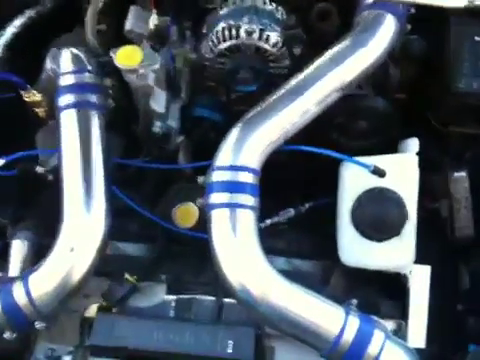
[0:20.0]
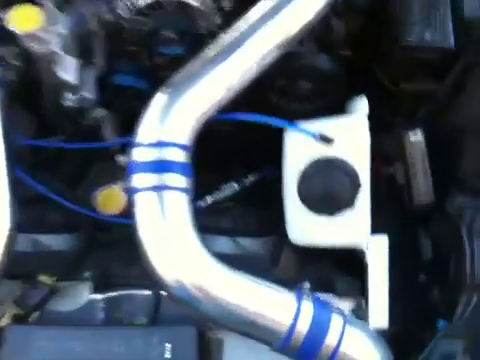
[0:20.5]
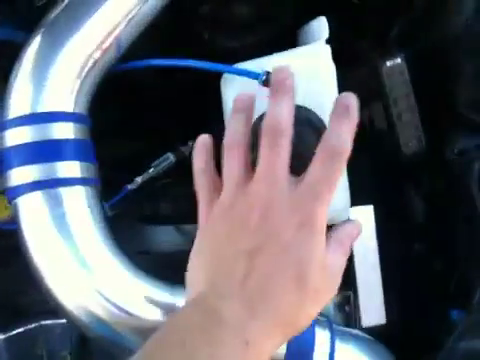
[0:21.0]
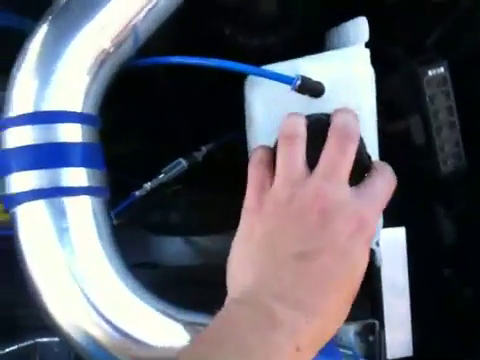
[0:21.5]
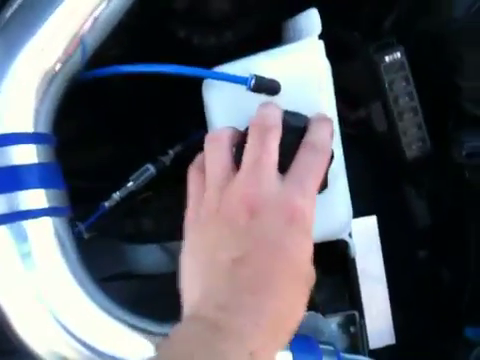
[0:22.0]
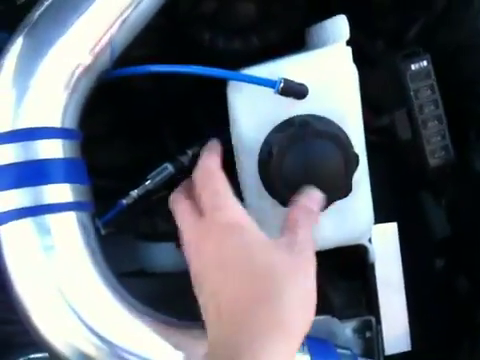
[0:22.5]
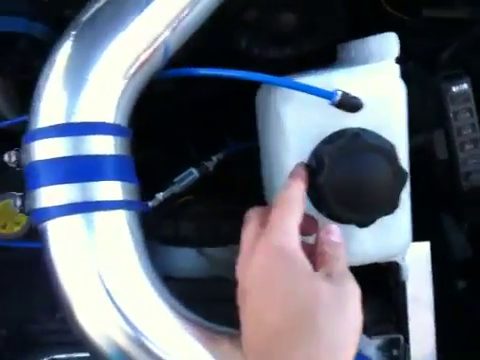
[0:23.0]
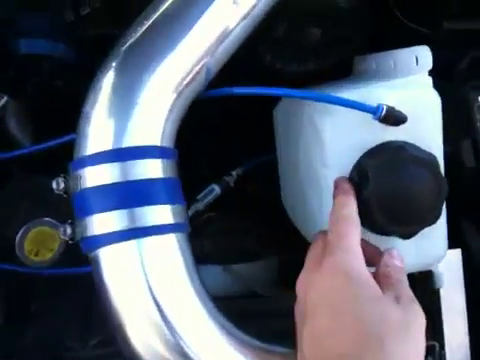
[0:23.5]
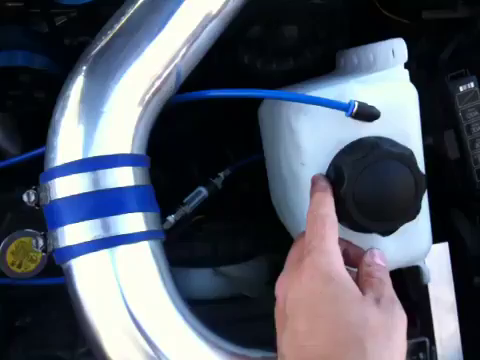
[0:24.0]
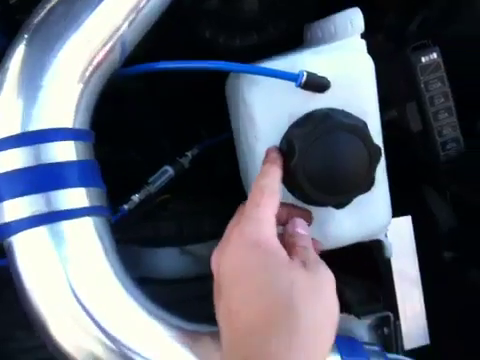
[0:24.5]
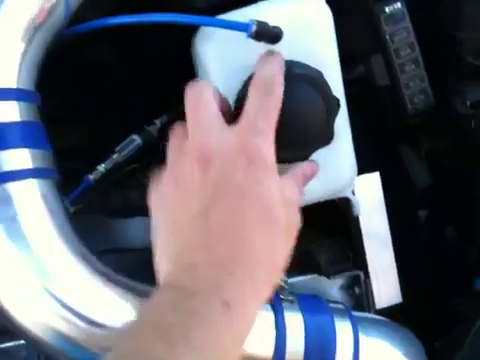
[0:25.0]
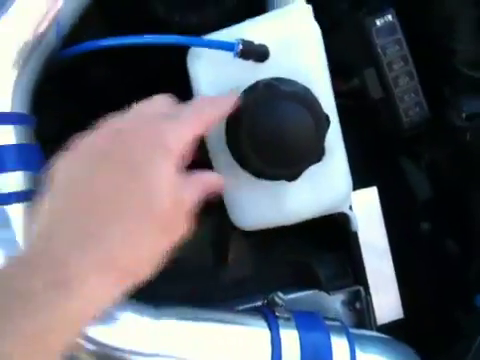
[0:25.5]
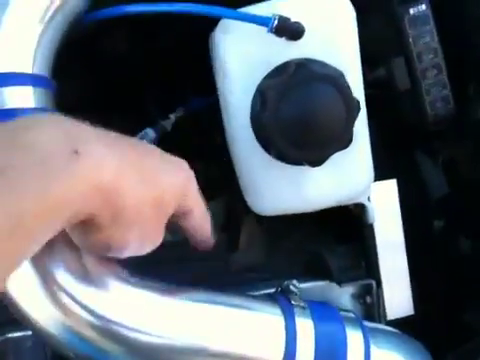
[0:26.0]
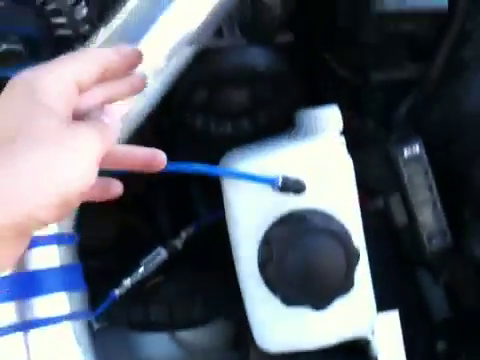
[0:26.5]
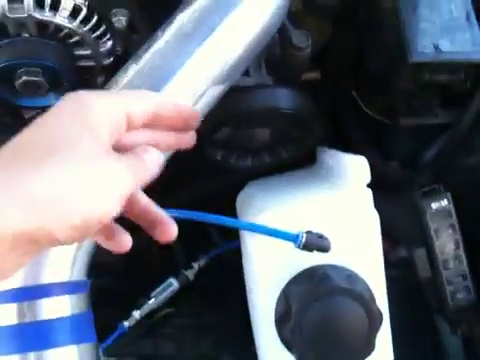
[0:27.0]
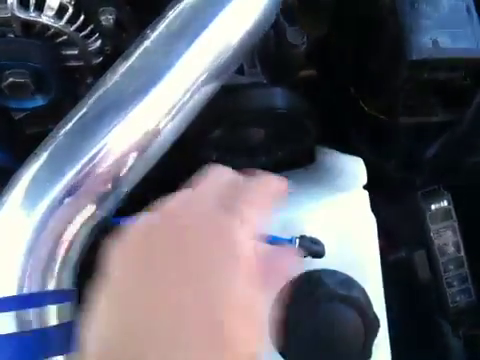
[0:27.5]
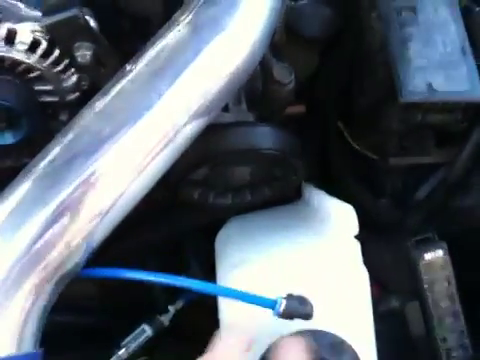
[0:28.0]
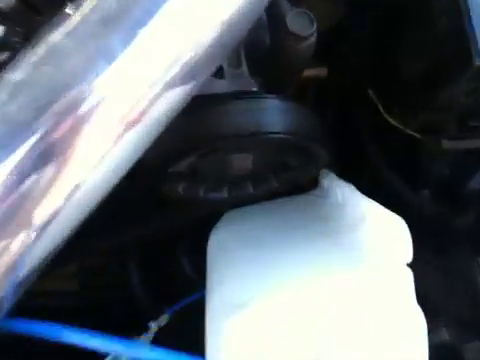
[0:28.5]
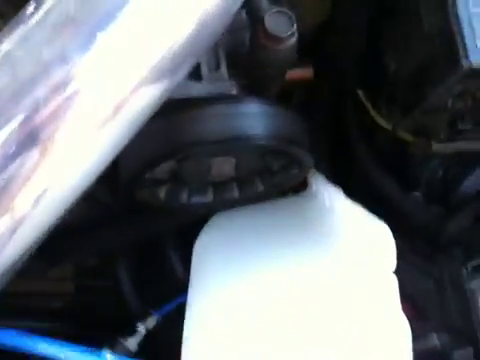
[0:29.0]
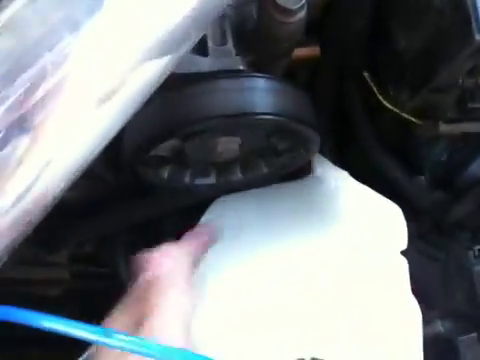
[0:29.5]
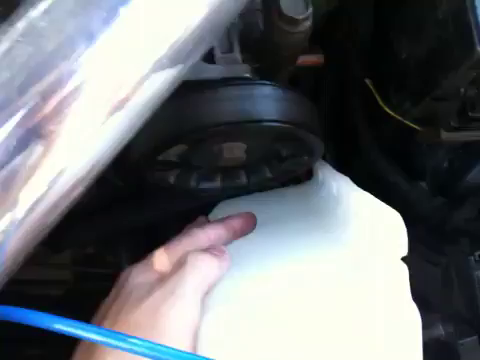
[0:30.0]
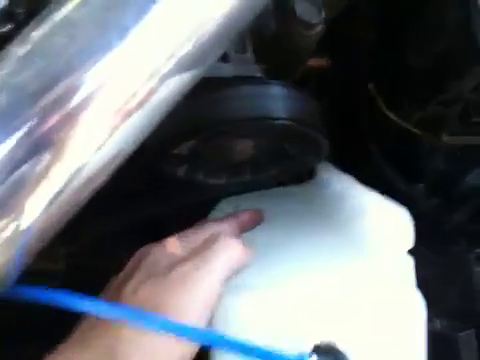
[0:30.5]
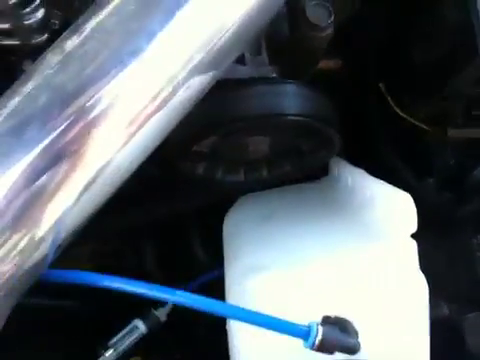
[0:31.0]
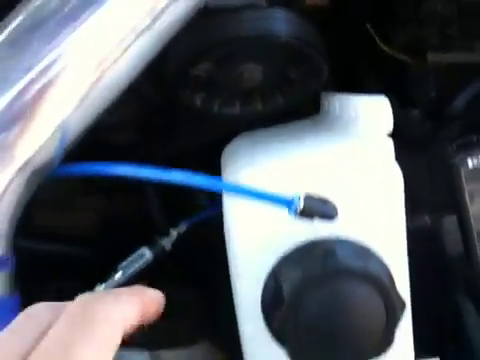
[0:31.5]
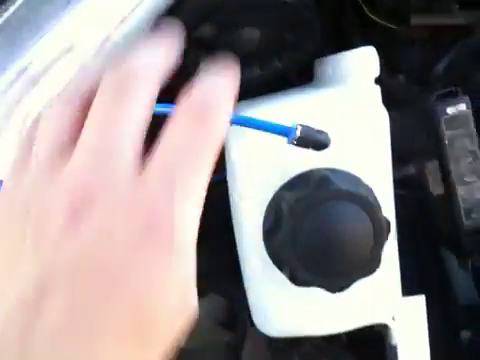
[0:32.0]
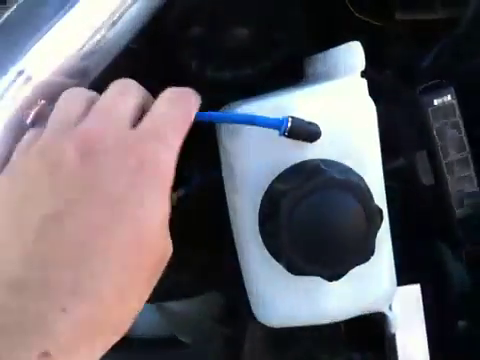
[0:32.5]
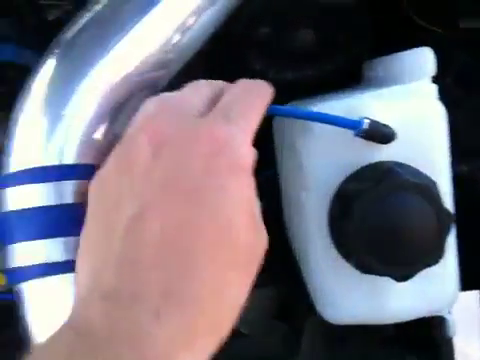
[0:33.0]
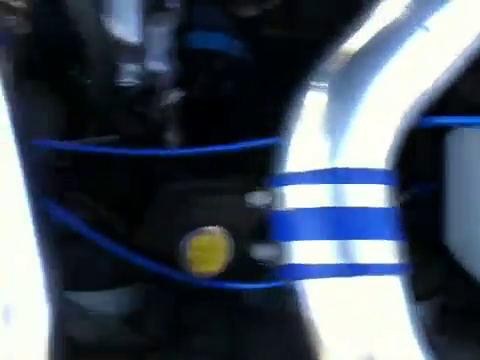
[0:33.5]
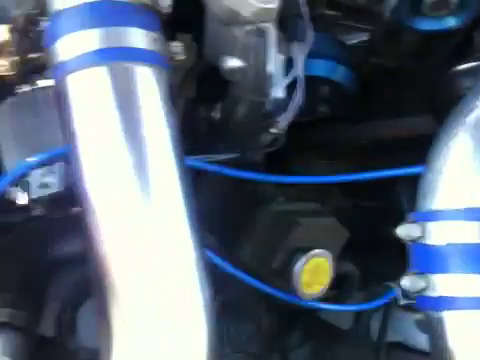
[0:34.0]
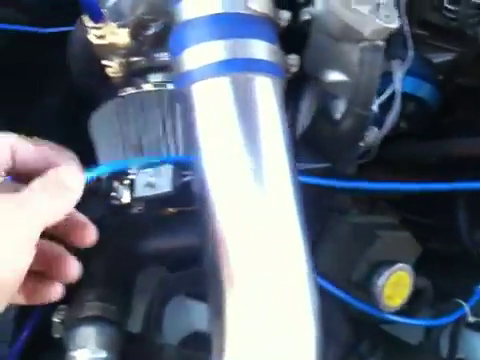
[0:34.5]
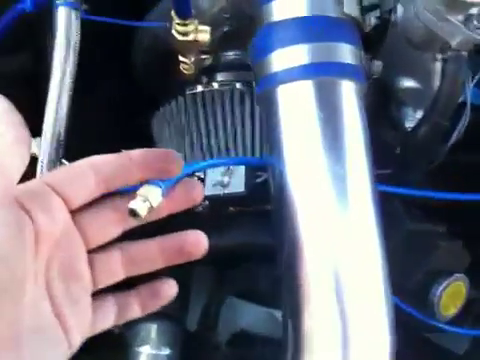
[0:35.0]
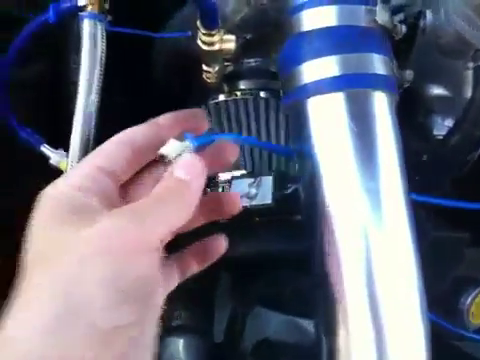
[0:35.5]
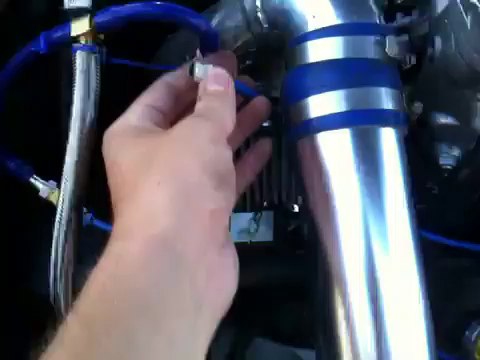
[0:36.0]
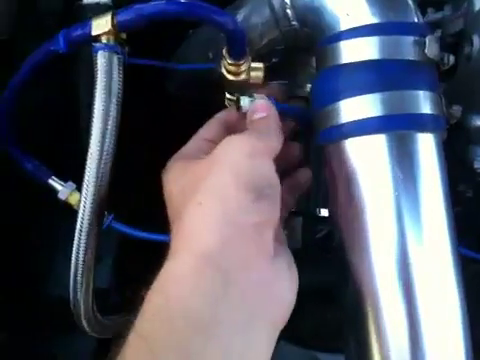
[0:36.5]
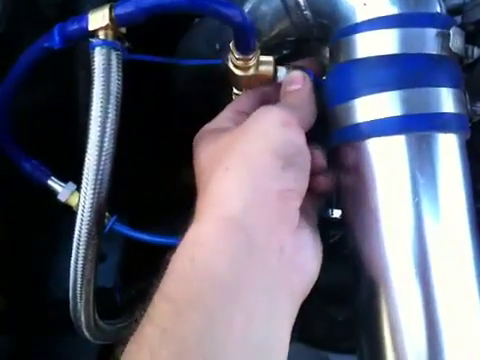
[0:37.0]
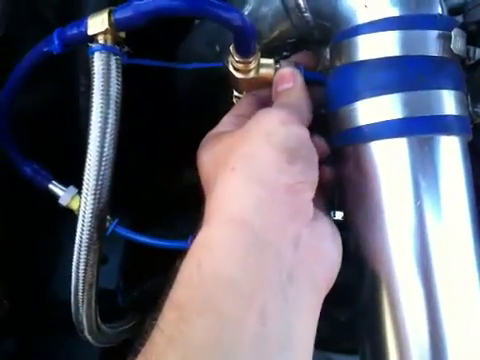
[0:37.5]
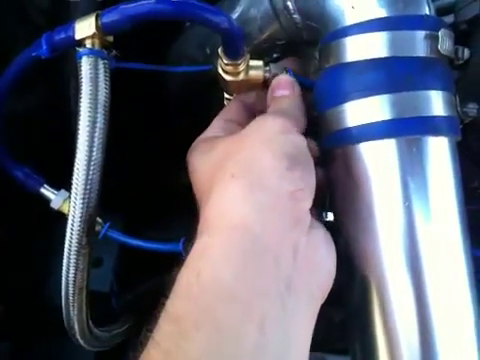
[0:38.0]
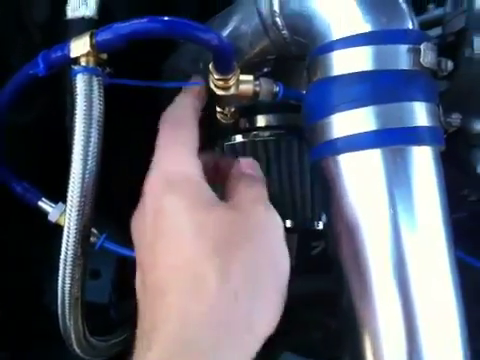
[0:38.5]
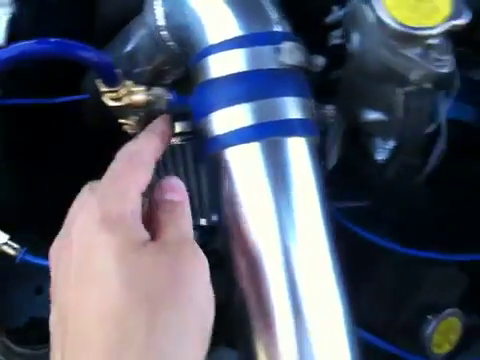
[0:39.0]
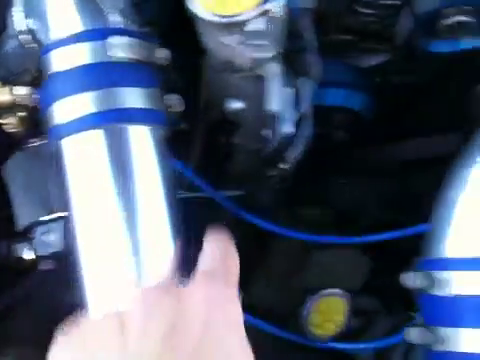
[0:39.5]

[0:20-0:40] The person continues recording under the hood and moves to a white bottled section on the right side, which appears to have a black cap on top of the white container. A blue wire is connected to this container. The person touches the cap and acts as if to turn it but does not, then touches the base of the container and the blue wire. The wire continues to the left side, where one end of it is not connected to where it should be. The person then connects the blue wire's end to a golden section.